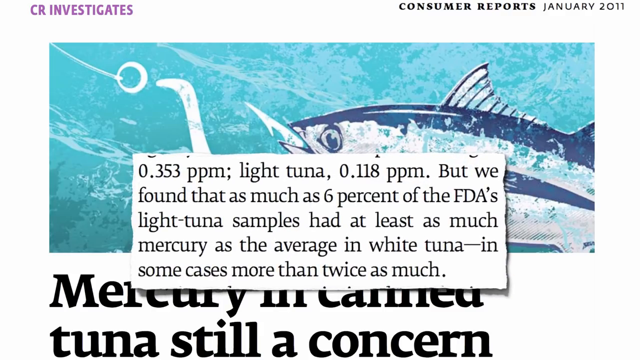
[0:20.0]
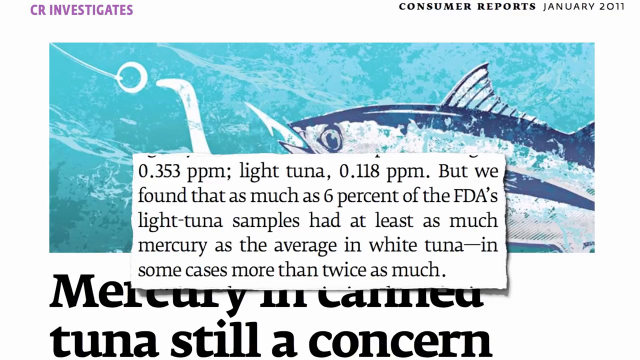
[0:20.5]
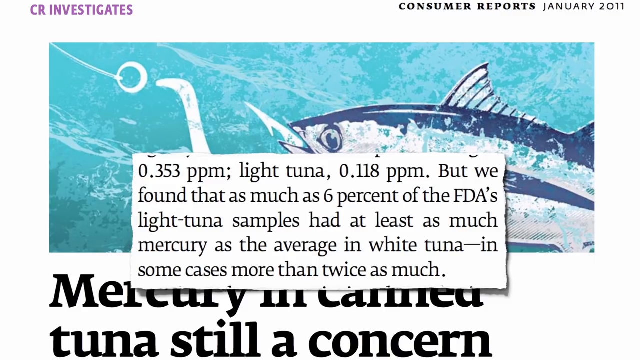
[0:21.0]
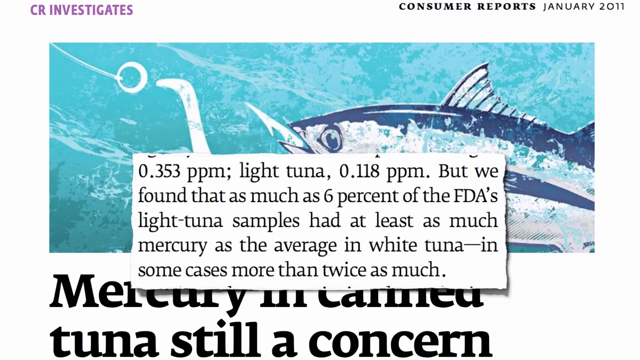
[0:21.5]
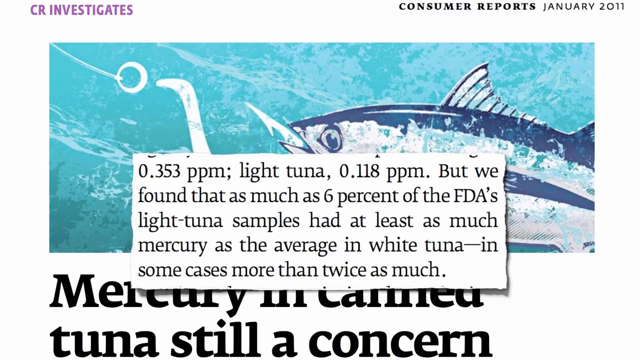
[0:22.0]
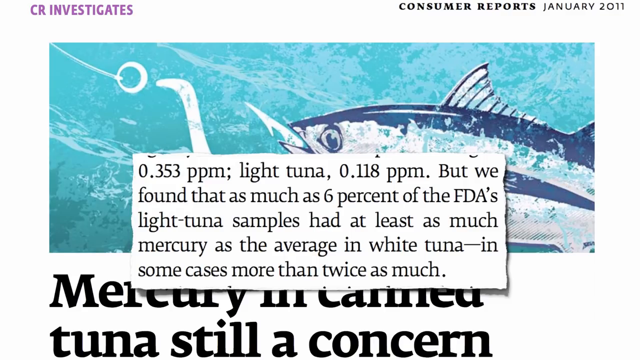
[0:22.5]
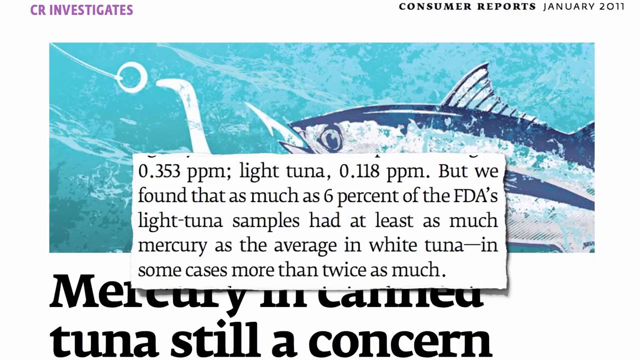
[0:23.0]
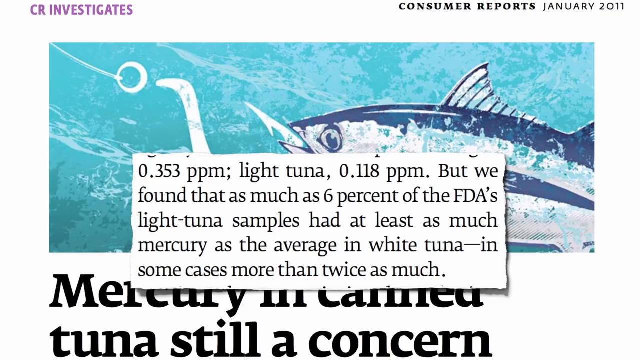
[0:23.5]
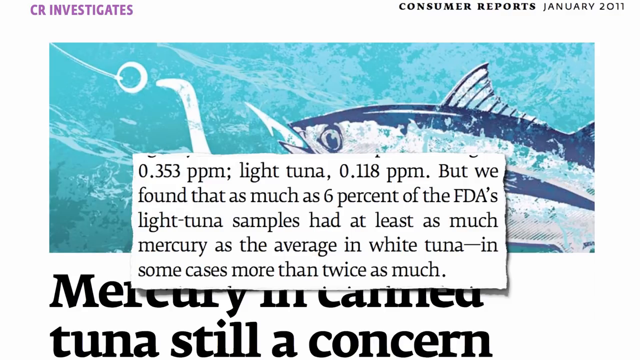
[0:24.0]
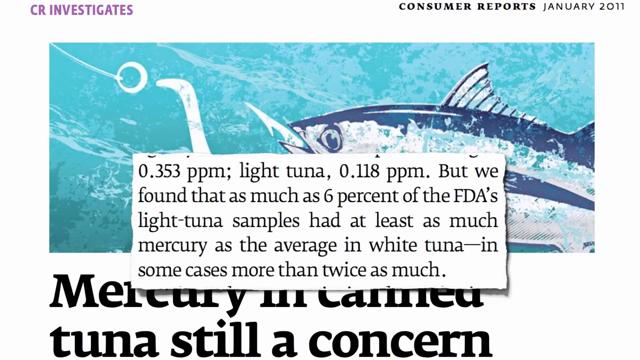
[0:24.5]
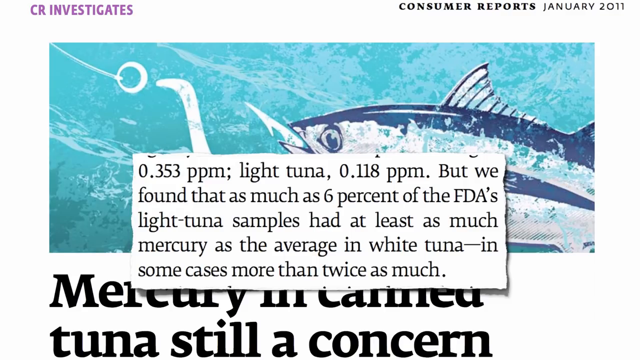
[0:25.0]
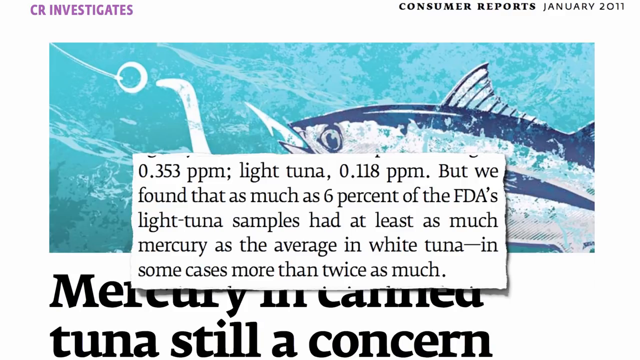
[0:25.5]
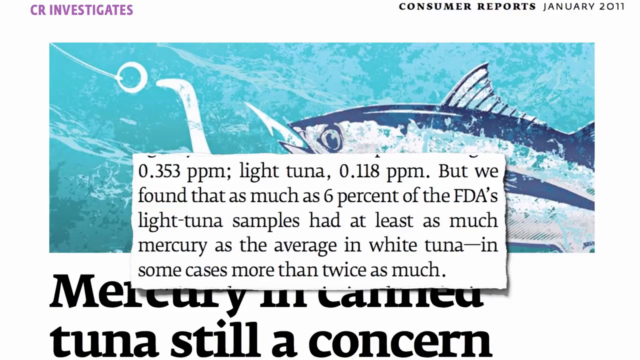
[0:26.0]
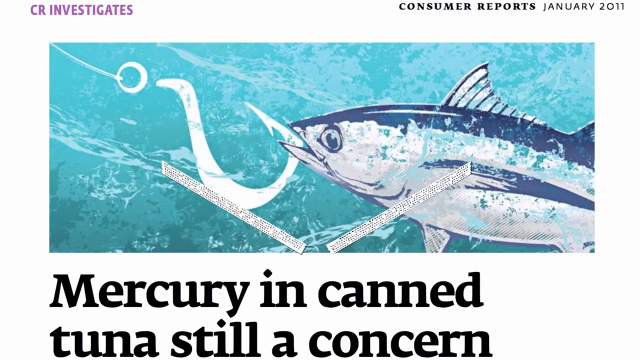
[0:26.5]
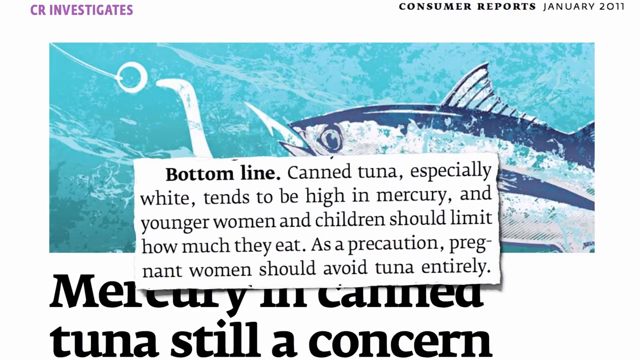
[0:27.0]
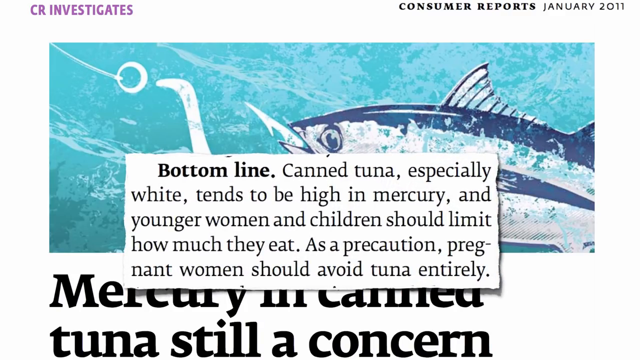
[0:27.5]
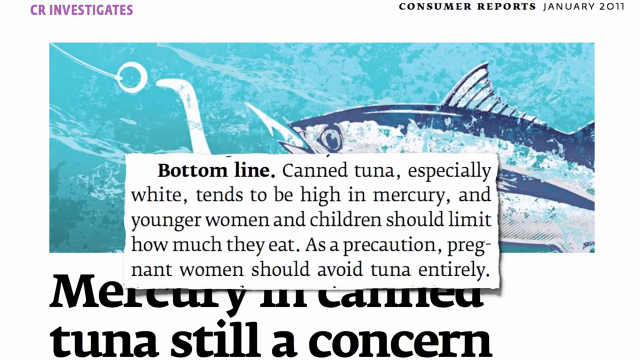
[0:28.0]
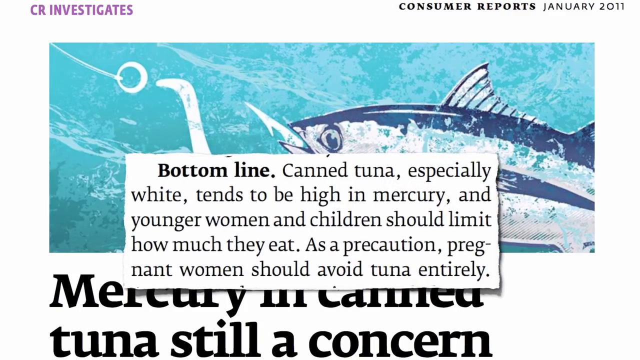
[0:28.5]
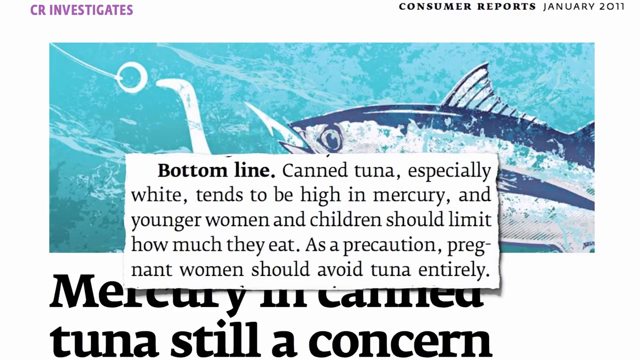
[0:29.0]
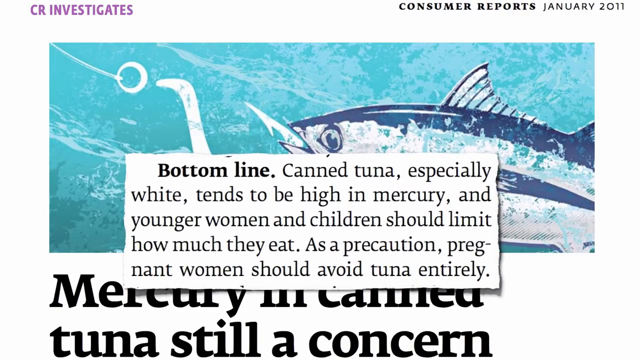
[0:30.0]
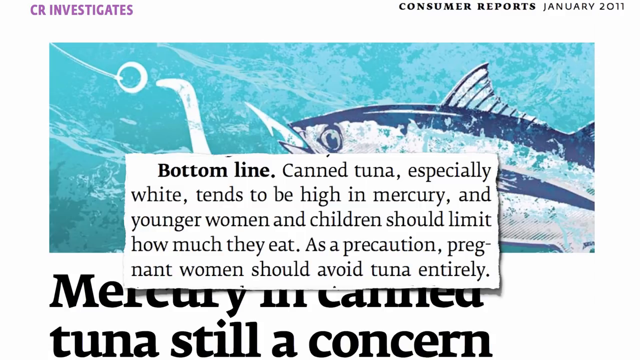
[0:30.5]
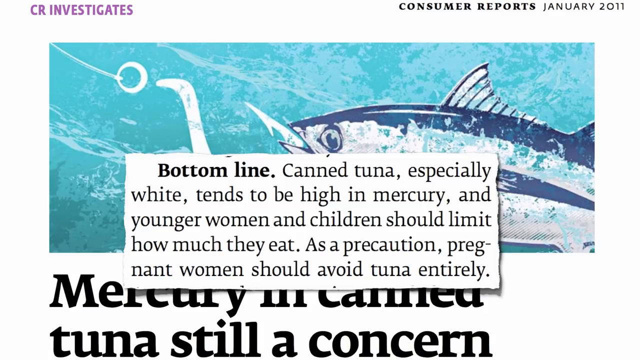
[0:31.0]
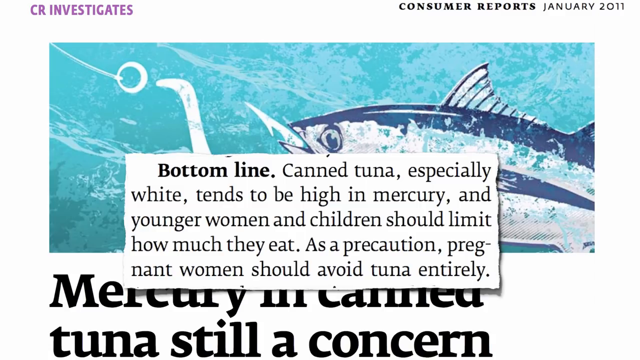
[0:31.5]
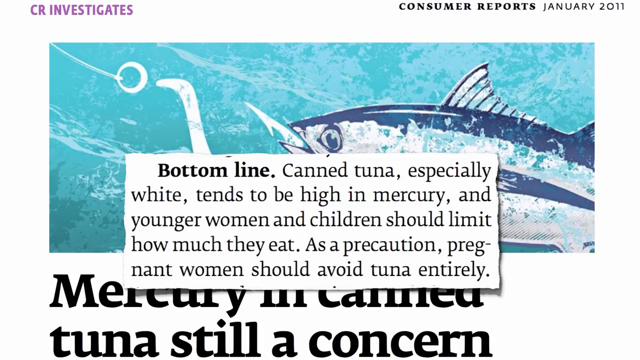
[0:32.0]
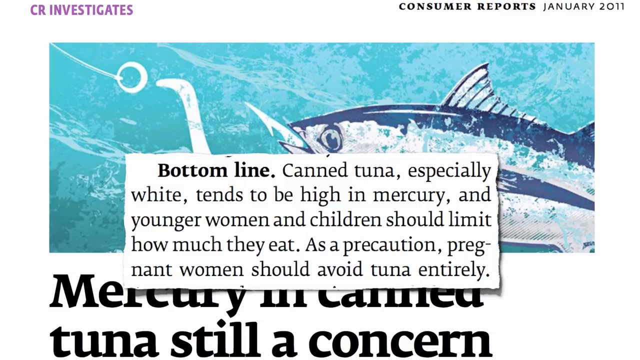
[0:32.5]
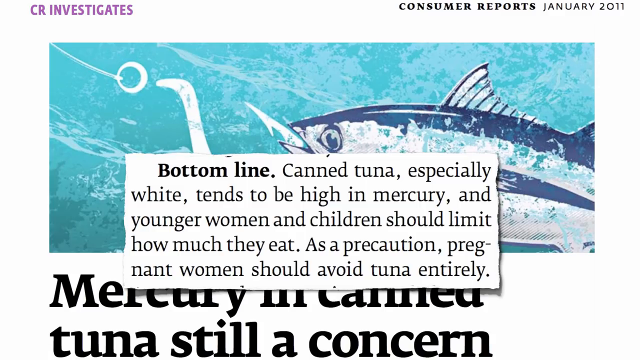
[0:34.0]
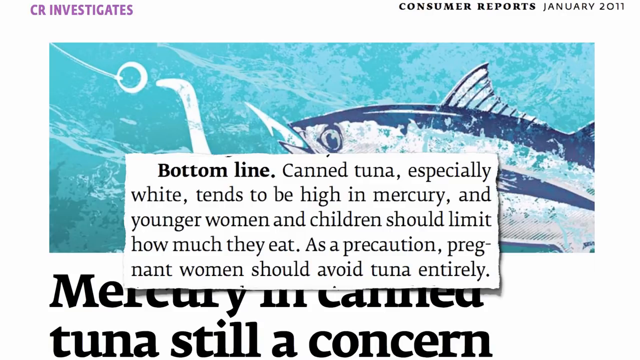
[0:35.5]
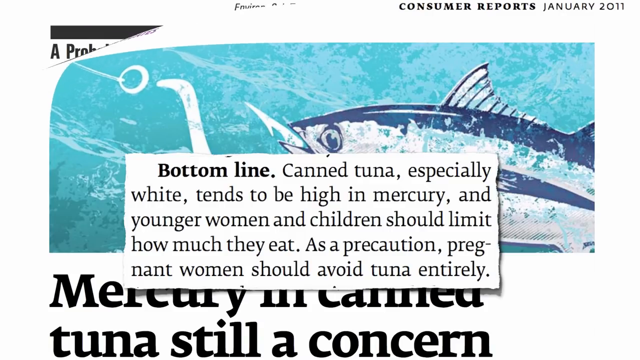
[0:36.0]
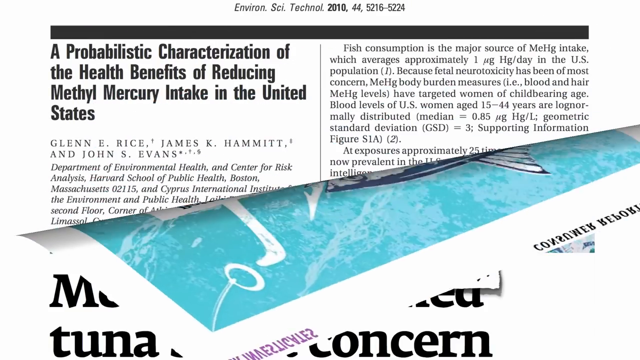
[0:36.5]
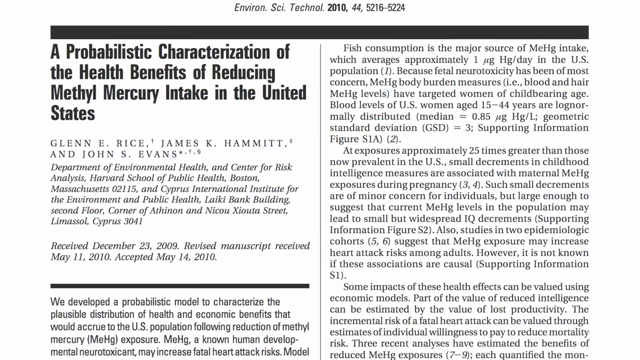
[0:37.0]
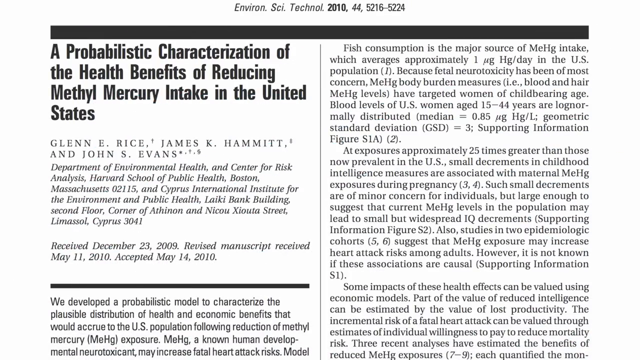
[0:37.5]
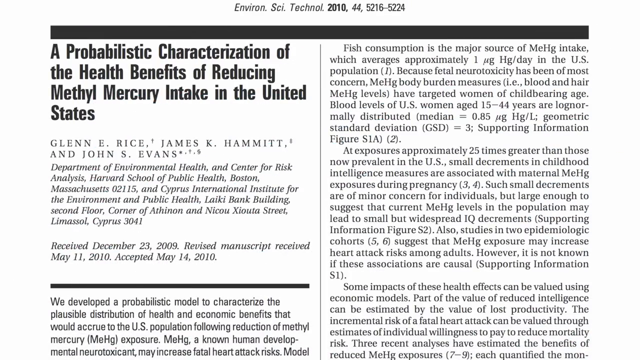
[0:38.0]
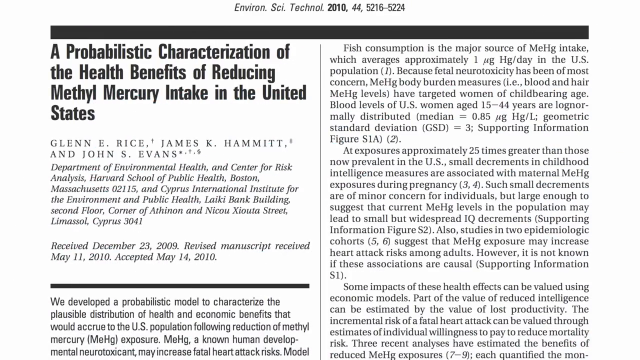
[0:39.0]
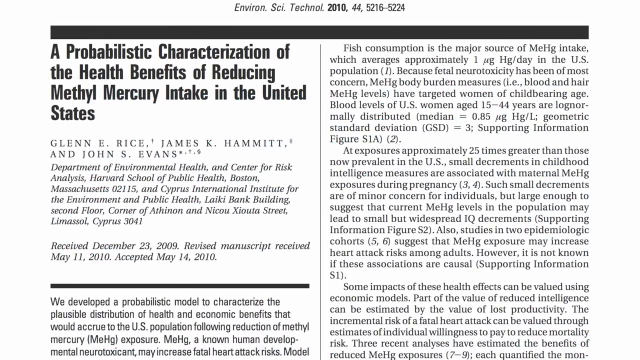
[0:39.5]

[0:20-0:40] The screen shows a picture of a fish with a hook in its mouth in teal ocean waters, with text overlaid on the picture: "0.353 ppm, light tuna, 0.188 ppm, but we found that as much as 6% of the FDA's light tuna samples had at least as much mercury as the average in white tuna, in some cases more than twice as much." At the bottom of the screen, black text reads "mercury in canned tuna is still a concern." The text in front of the picture of the tuna changes to read "bottom line, canned tuna, especially white, tends to be high in mercury and younger women and children should limit how much they eat. As a precaution, pregnant women should avoid tuna entirely." The screen then changes to a new page made up entirely of text, with no picture, titled "a probabilistic characterization of the health benefits of reducing methylmercury intake in the United States," with a lot of smaller text underneath the title.